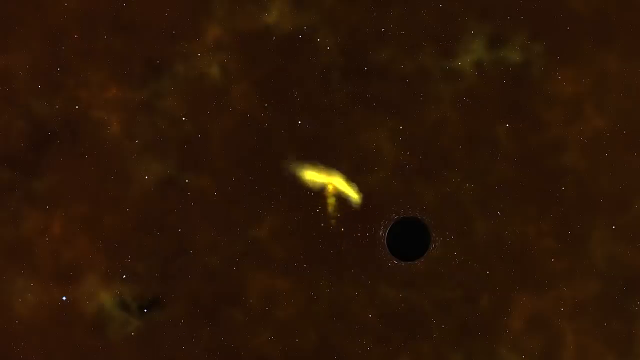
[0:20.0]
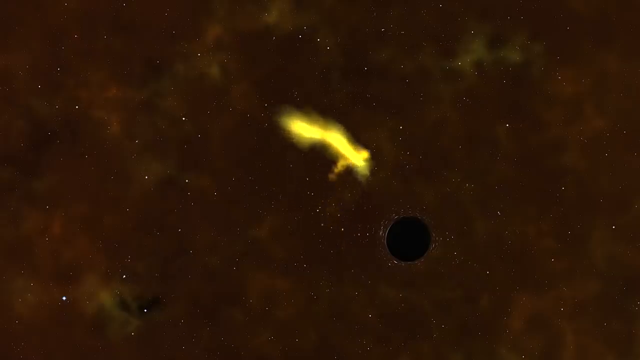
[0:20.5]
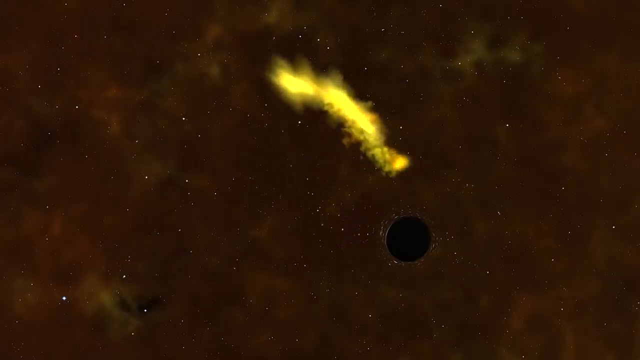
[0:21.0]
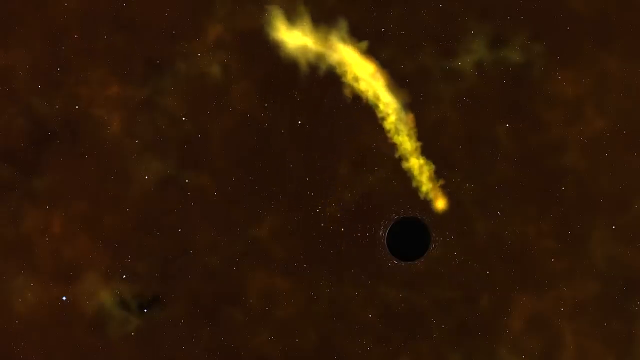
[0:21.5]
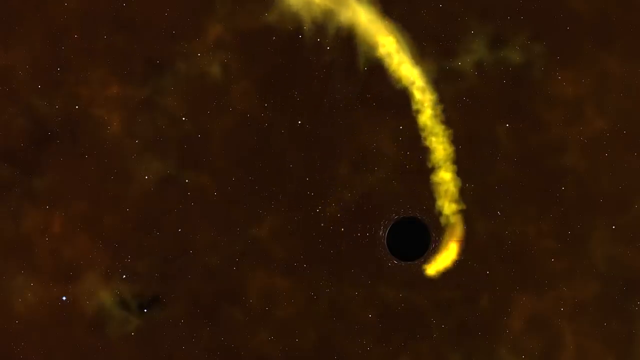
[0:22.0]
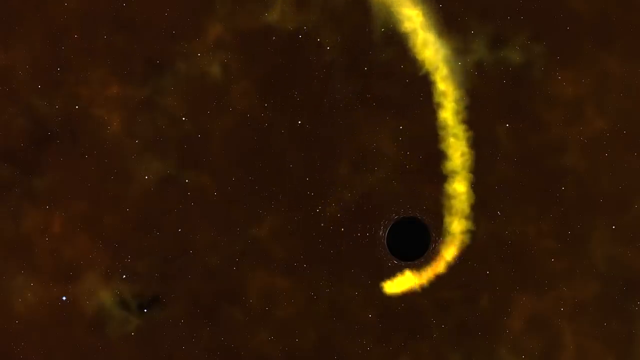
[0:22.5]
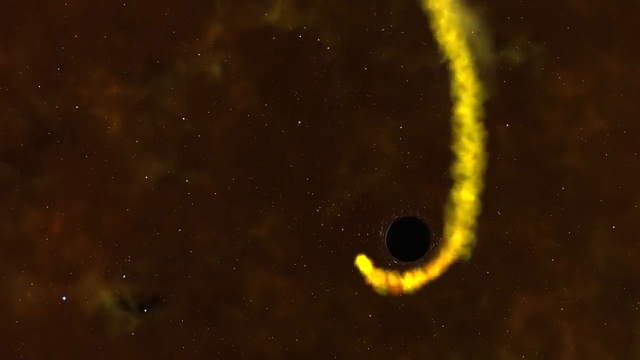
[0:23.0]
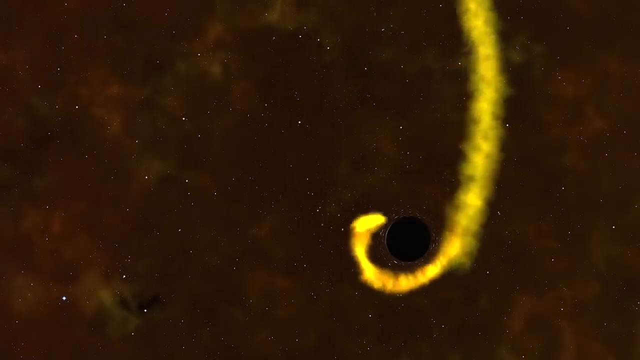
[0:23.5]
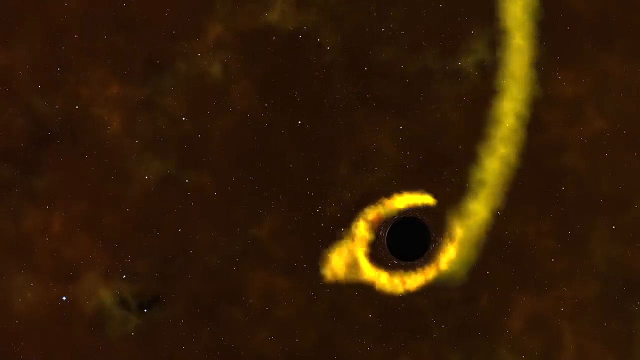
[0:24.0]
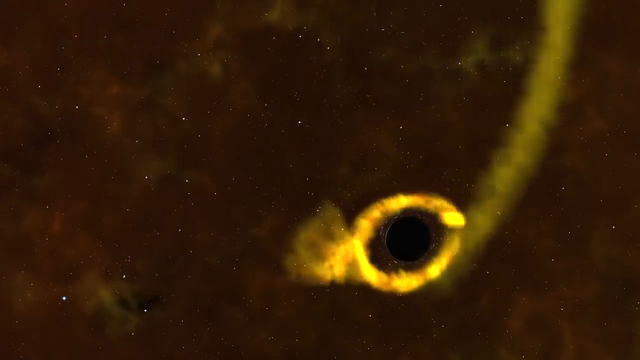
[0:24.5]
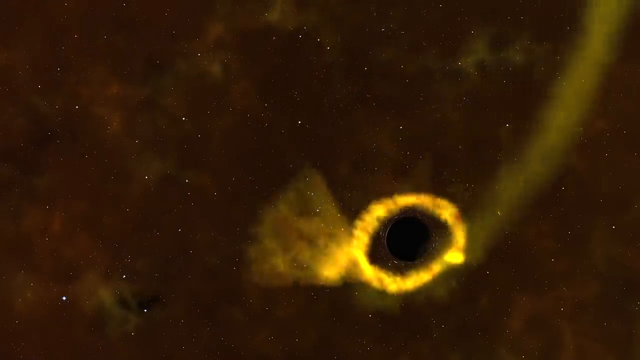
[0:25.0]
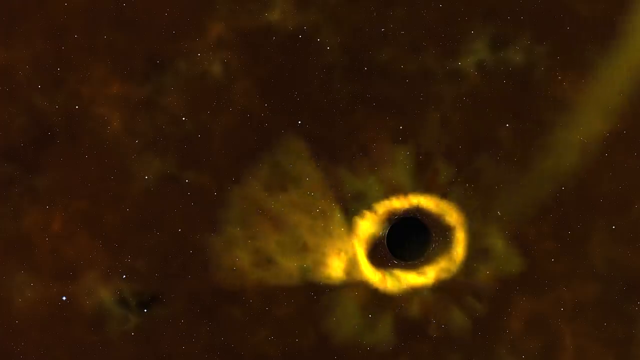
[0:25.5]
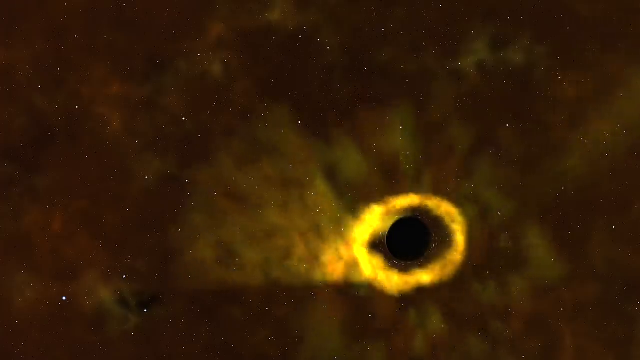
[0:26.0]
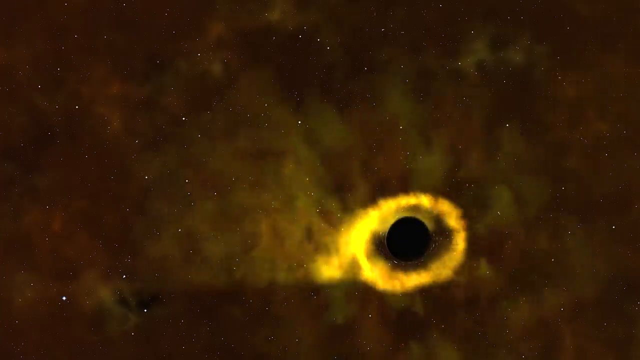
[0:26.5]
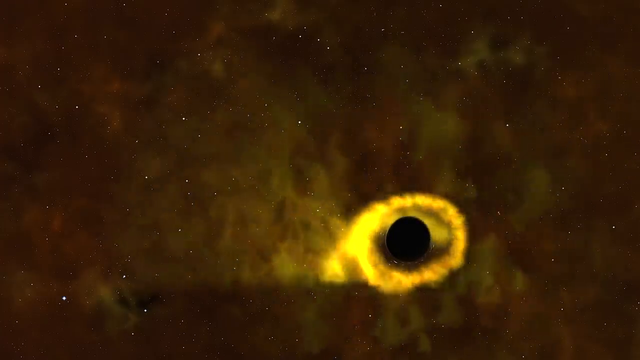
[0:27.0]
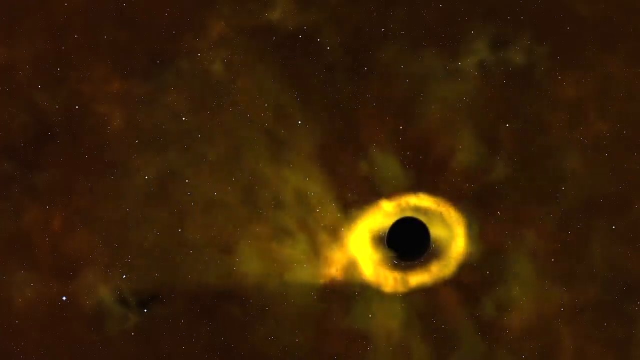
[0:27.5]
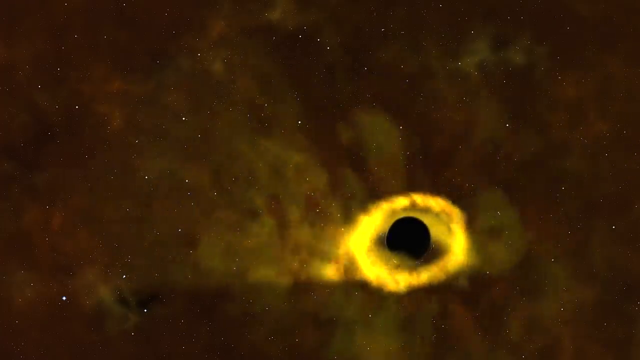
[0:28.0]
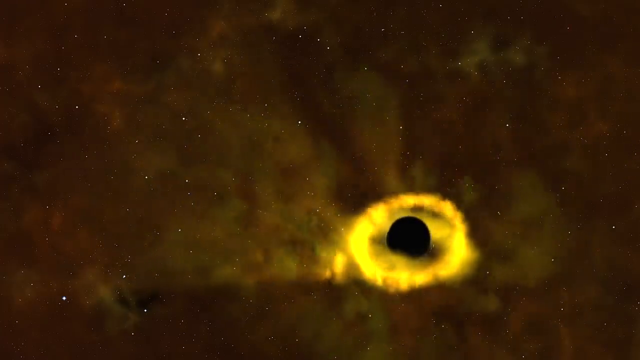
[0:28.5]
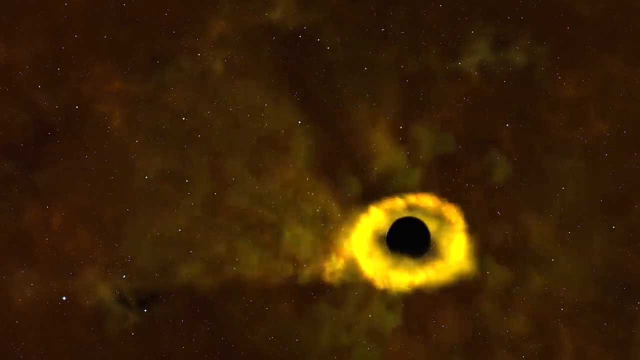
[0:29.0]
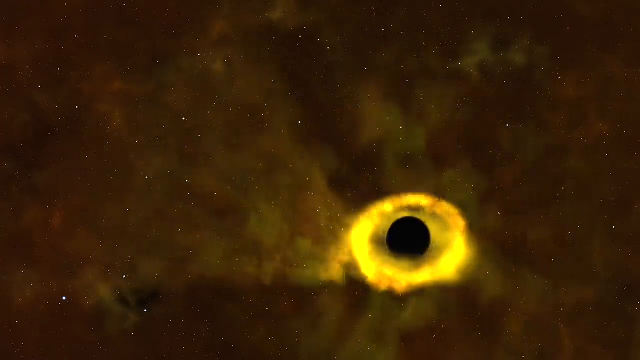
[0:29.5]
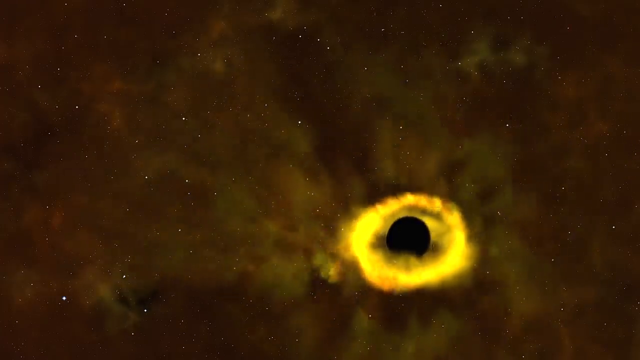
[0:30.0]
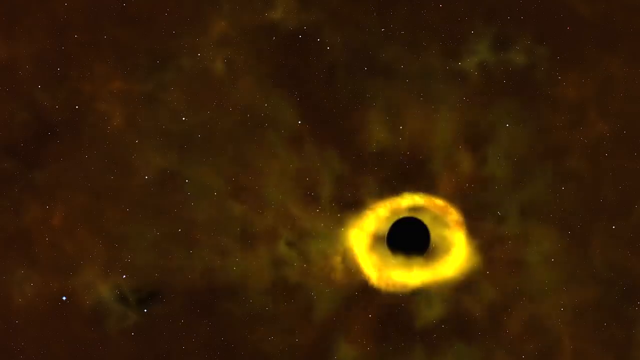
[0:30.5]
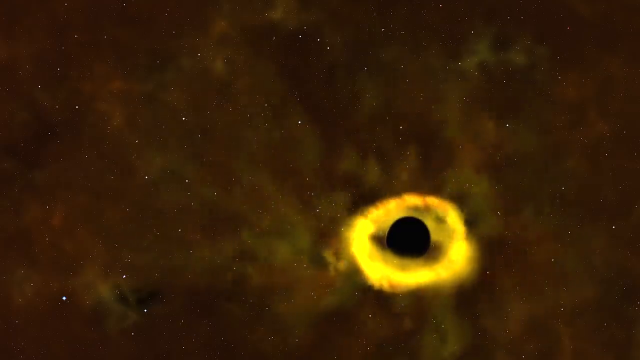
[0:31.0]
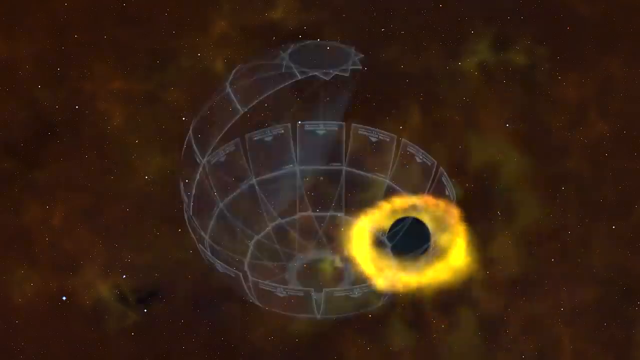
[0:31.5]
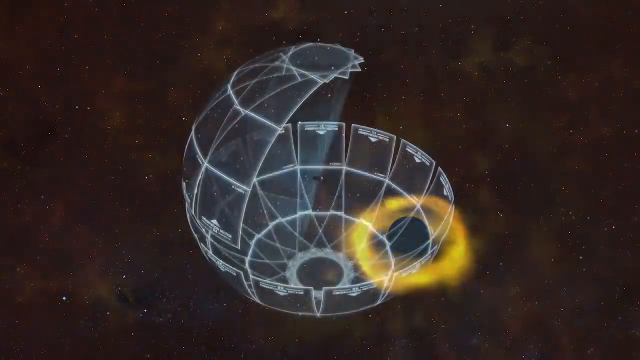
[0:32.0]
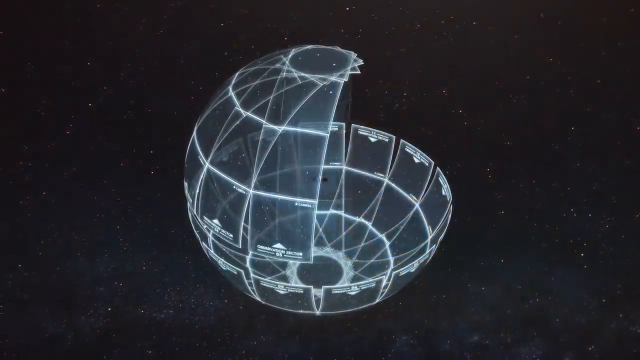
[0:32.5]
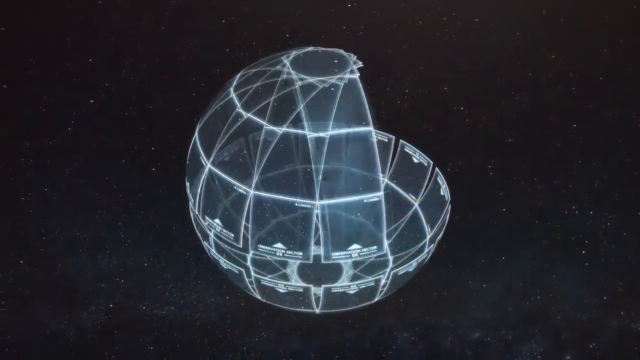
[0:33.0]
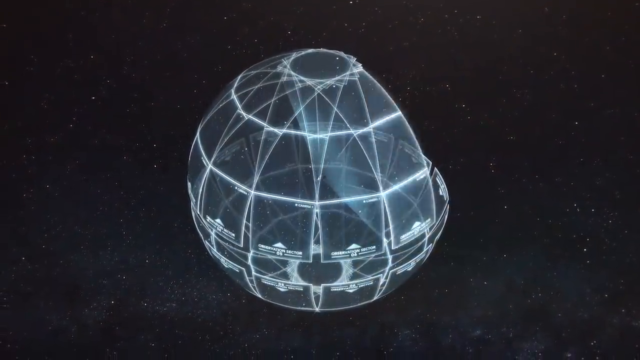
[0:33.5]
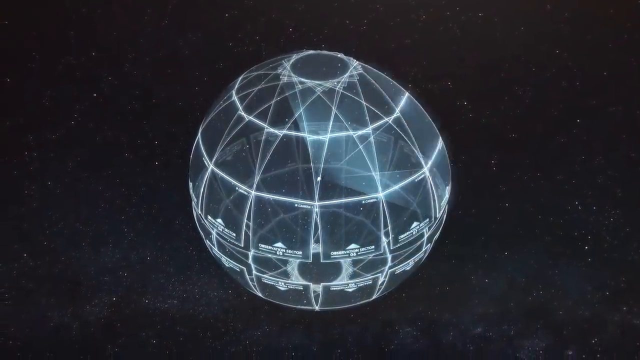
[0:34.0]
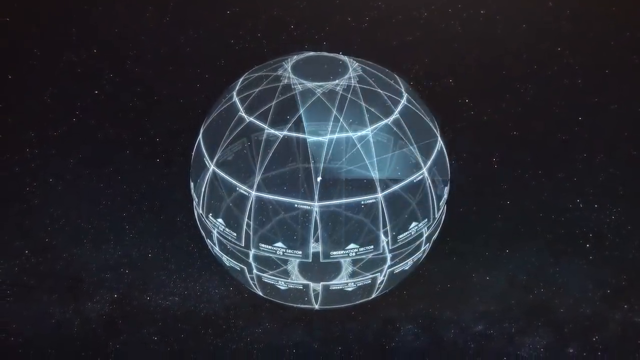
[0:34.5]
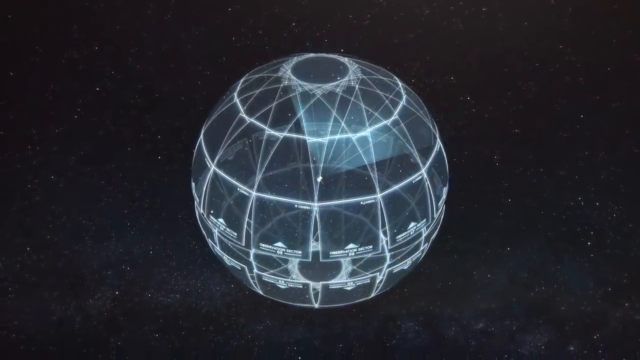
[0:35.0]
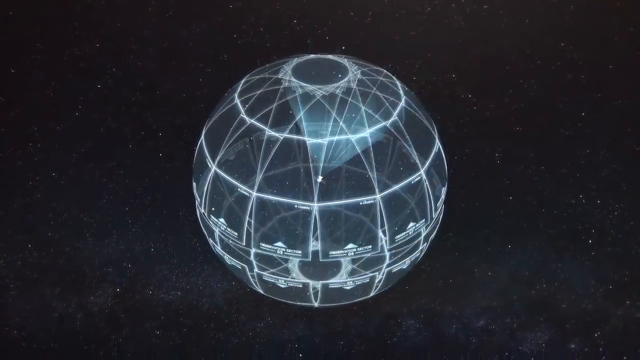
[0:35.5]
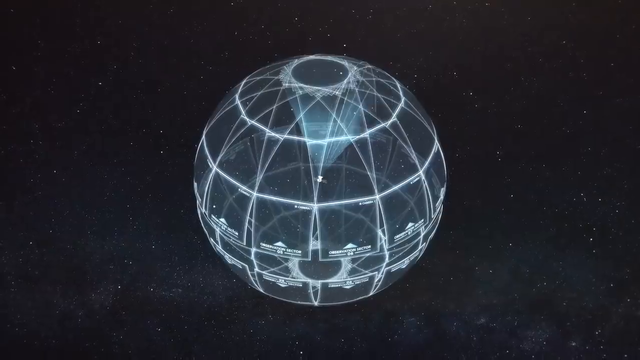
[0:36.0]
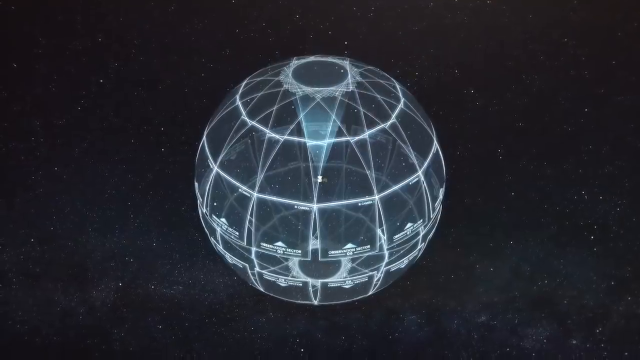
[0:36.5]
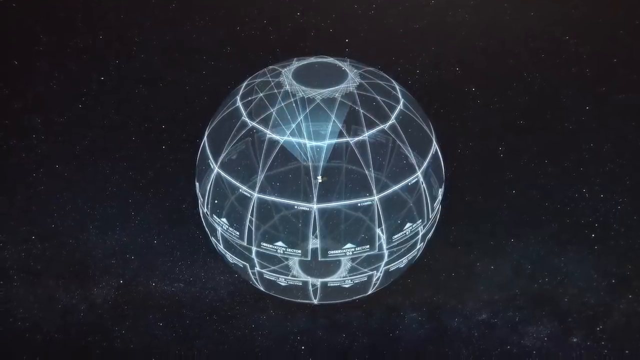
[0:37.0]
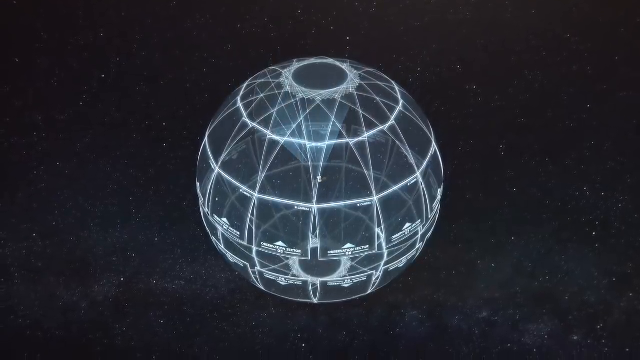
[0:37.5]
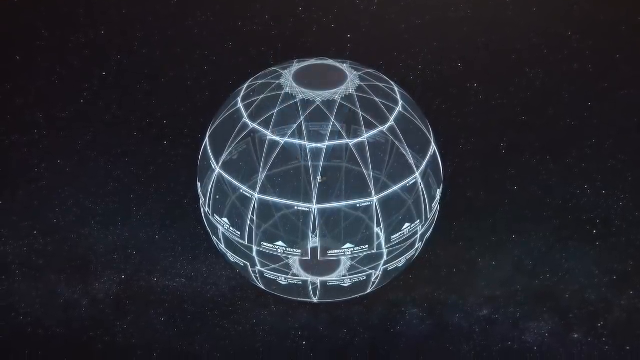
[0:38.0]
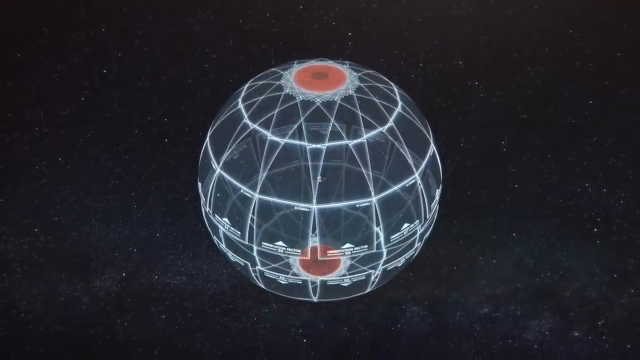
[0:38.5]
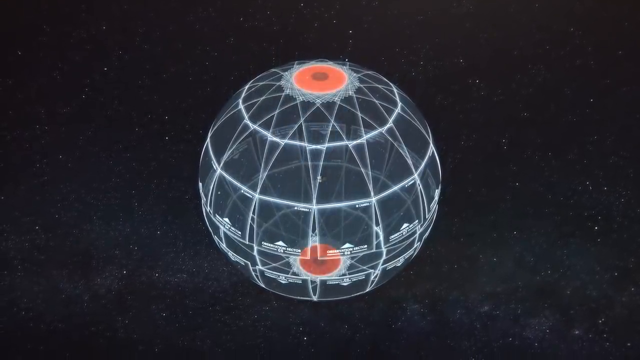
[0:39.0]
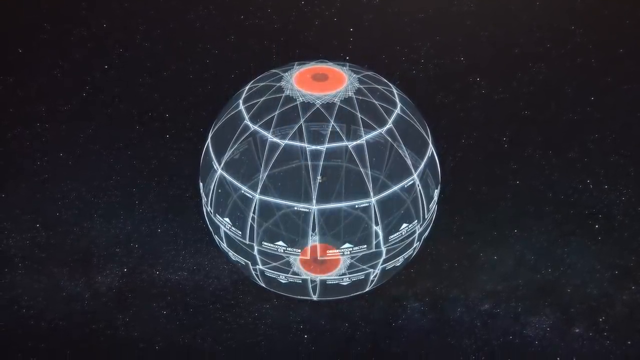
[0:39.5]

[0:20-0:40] There is what looks like a planet, and the planet has a lot of parts.